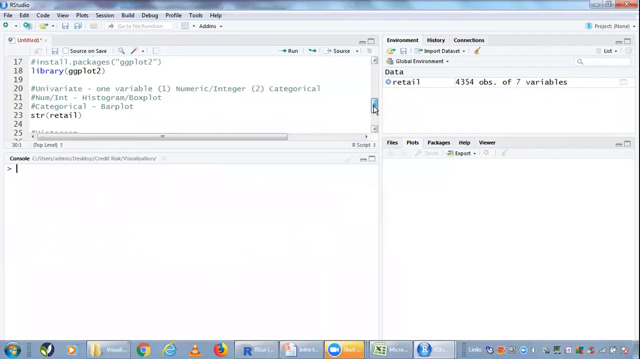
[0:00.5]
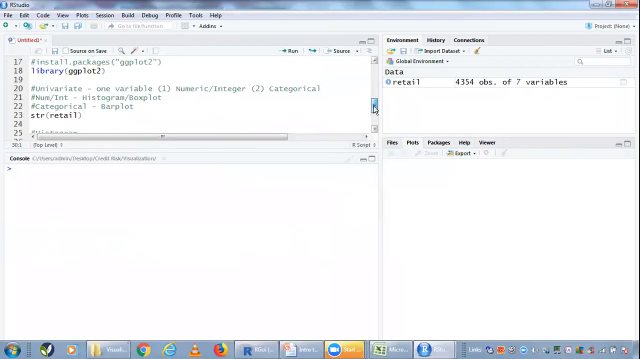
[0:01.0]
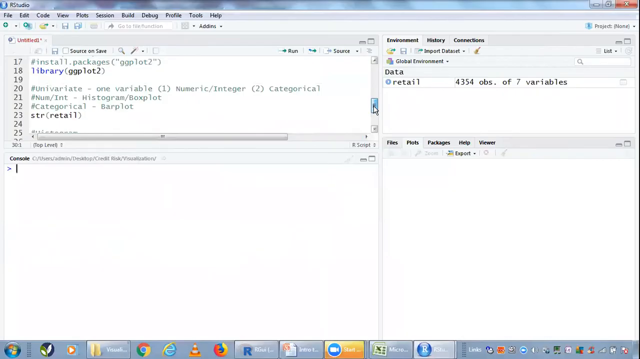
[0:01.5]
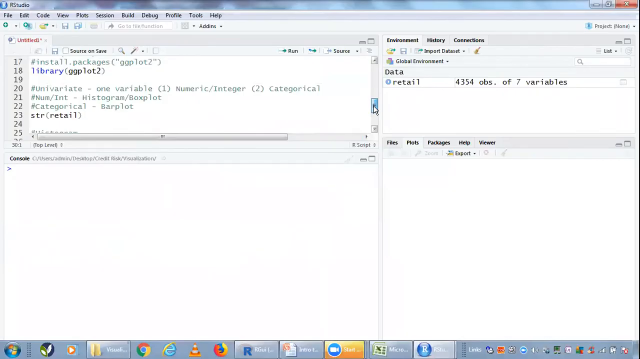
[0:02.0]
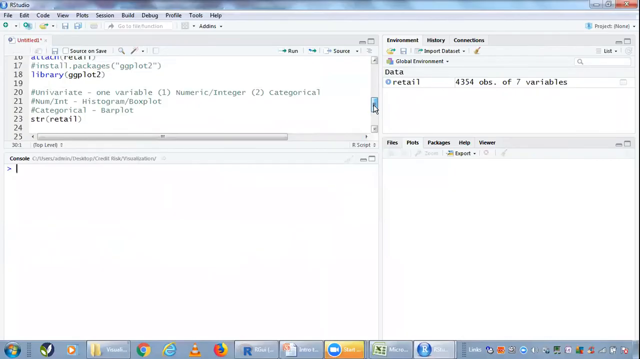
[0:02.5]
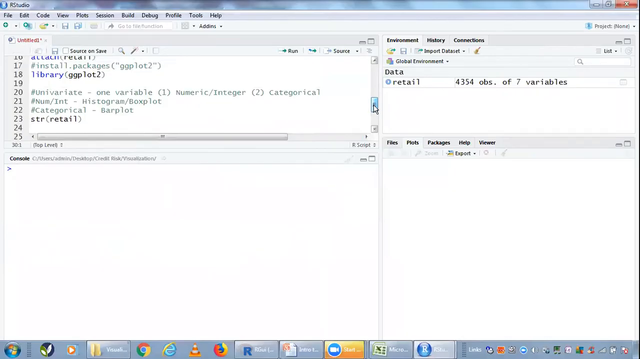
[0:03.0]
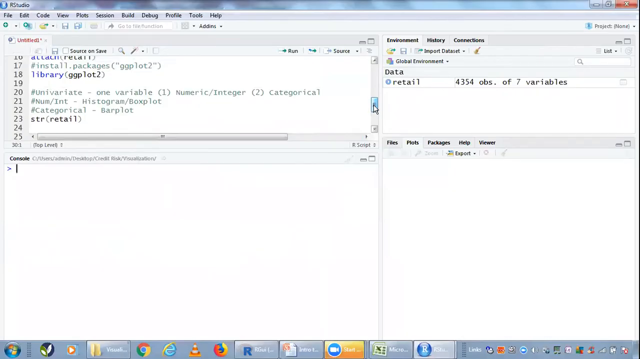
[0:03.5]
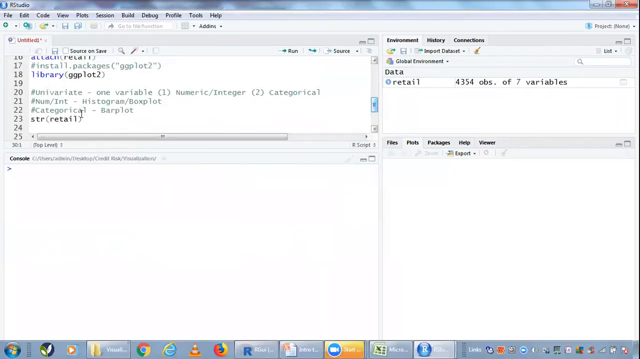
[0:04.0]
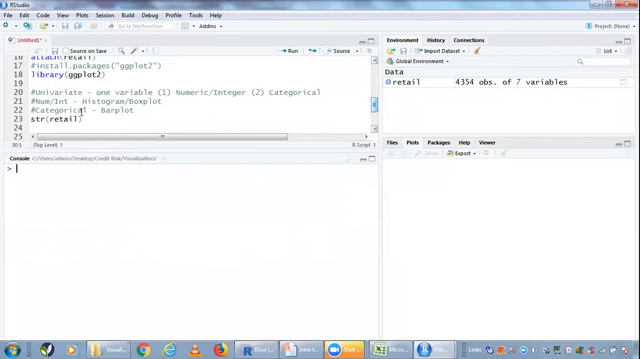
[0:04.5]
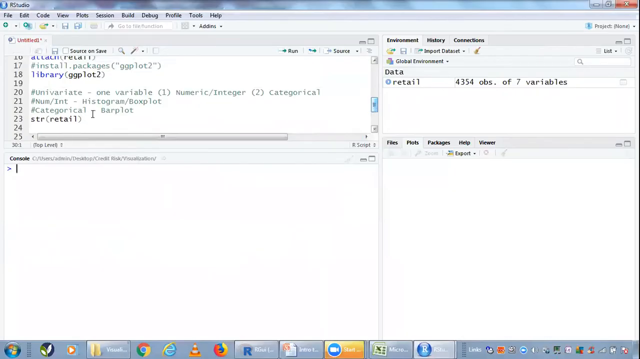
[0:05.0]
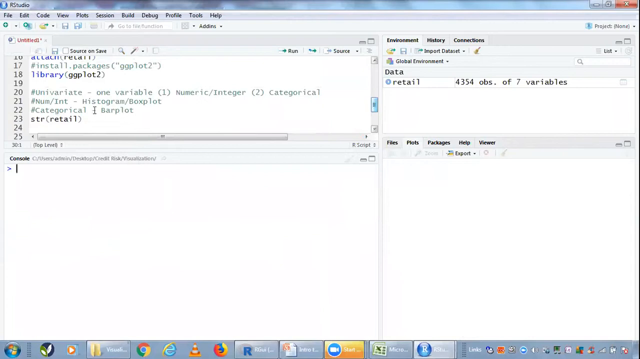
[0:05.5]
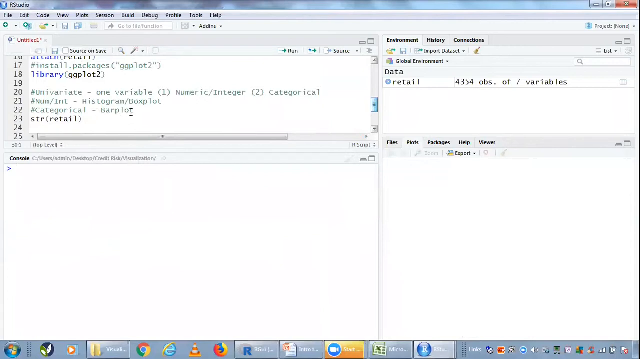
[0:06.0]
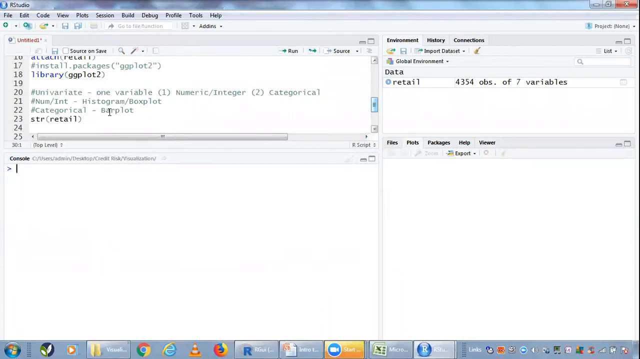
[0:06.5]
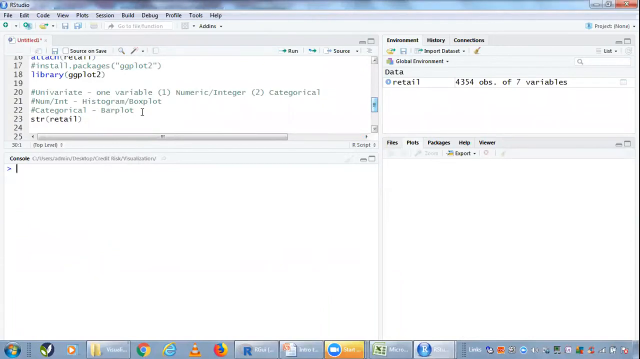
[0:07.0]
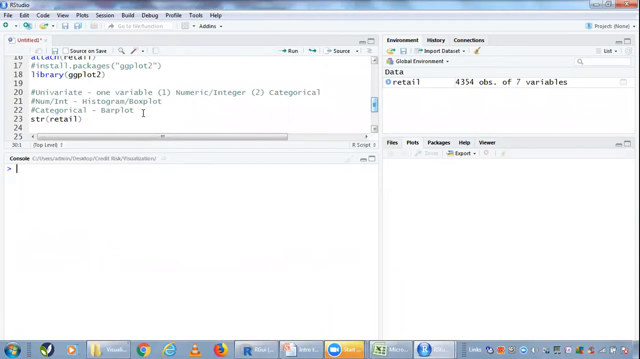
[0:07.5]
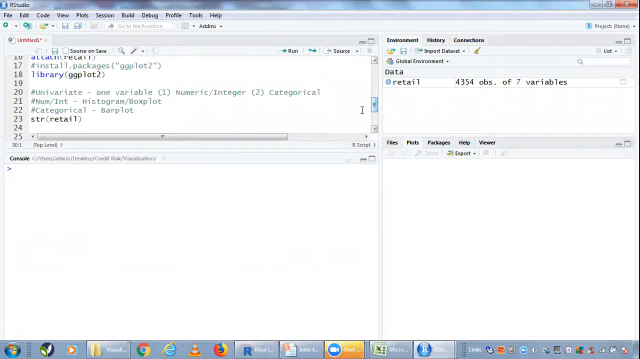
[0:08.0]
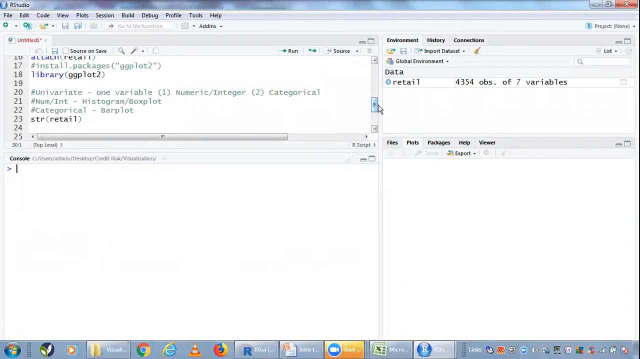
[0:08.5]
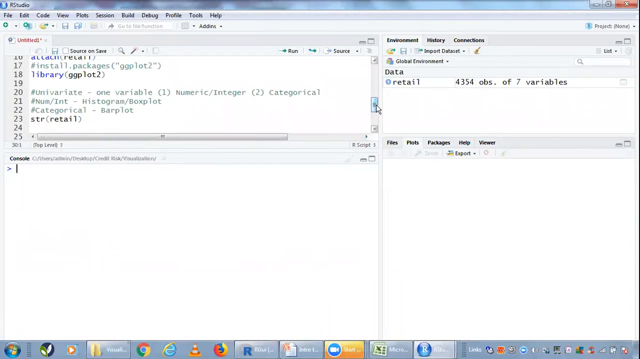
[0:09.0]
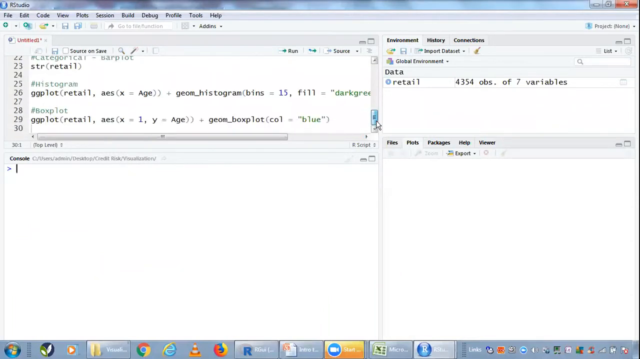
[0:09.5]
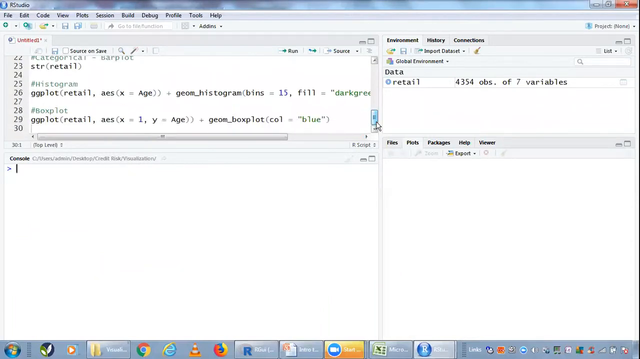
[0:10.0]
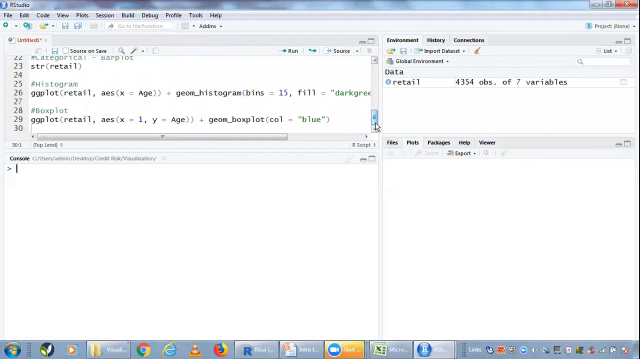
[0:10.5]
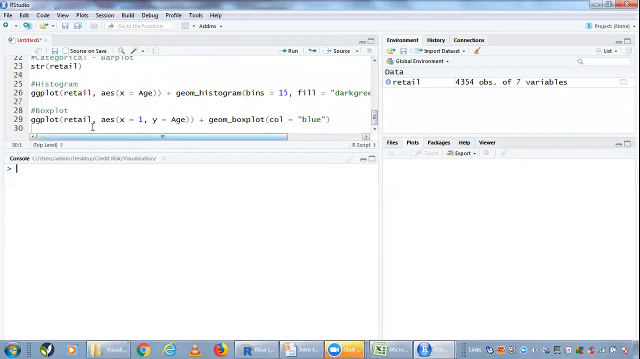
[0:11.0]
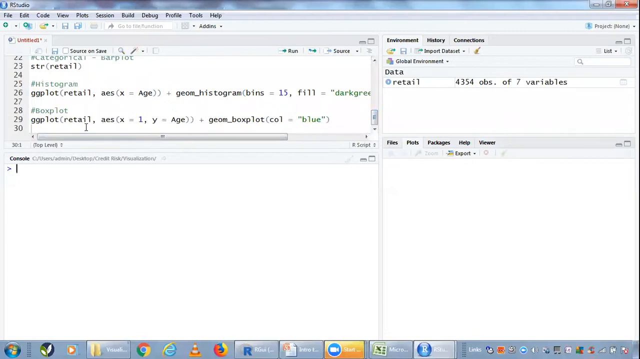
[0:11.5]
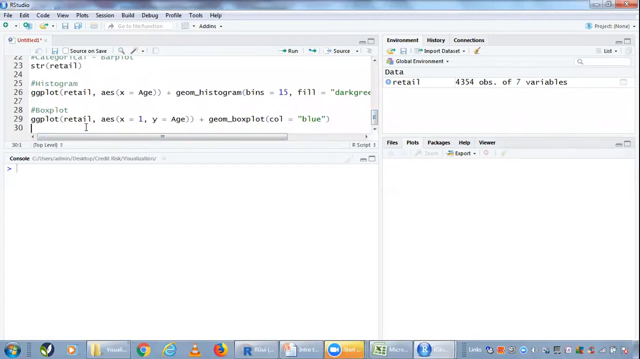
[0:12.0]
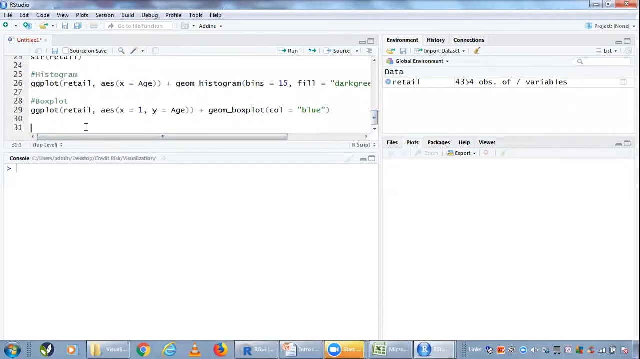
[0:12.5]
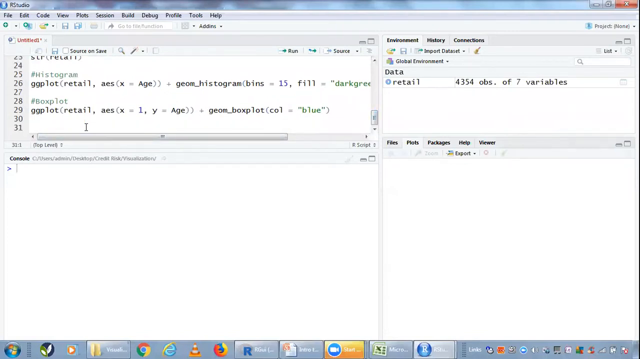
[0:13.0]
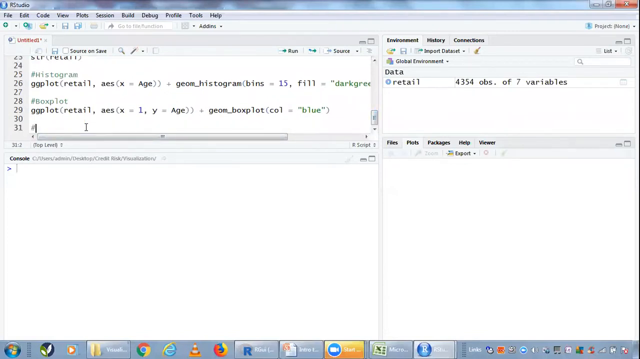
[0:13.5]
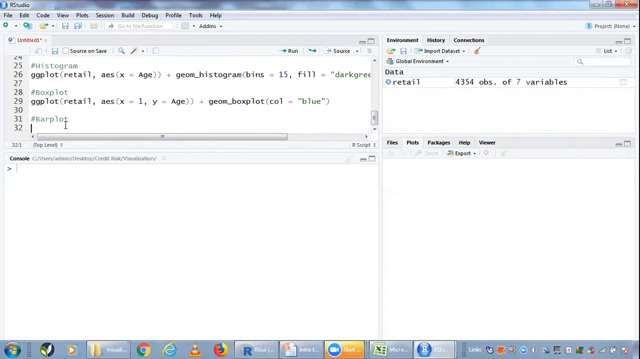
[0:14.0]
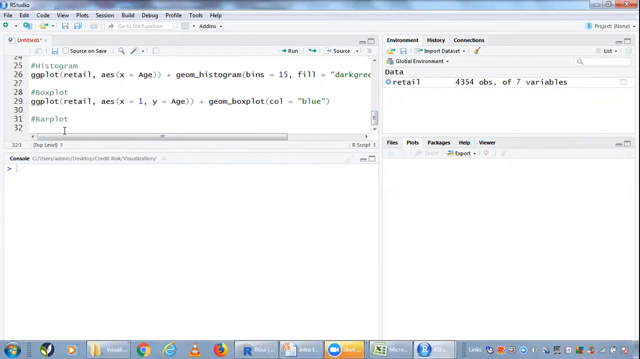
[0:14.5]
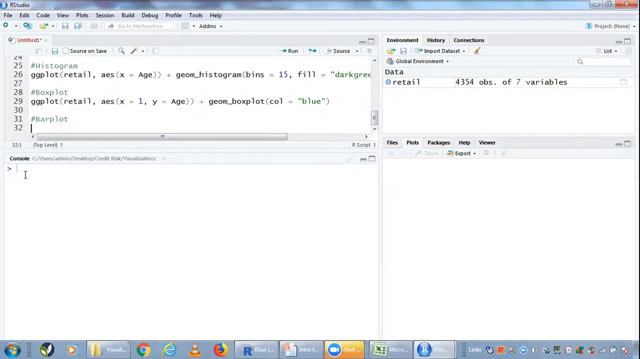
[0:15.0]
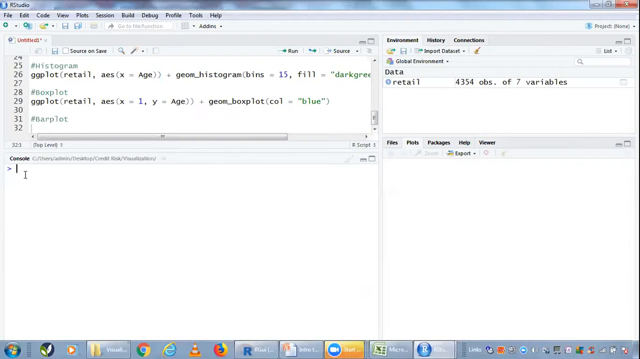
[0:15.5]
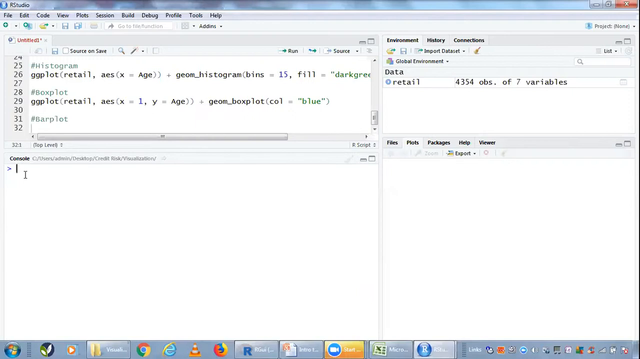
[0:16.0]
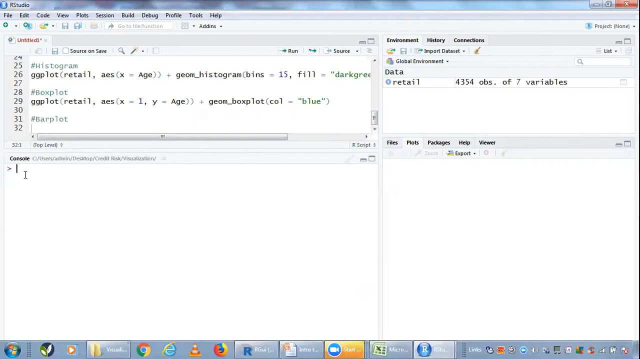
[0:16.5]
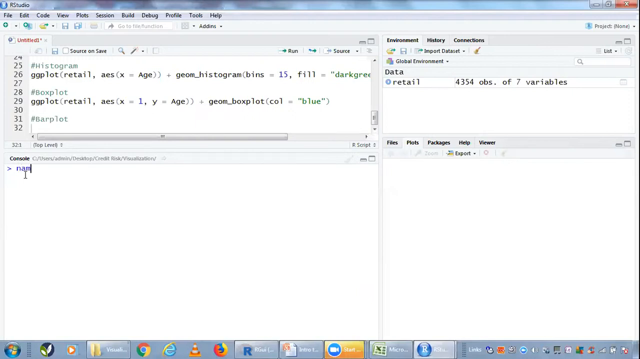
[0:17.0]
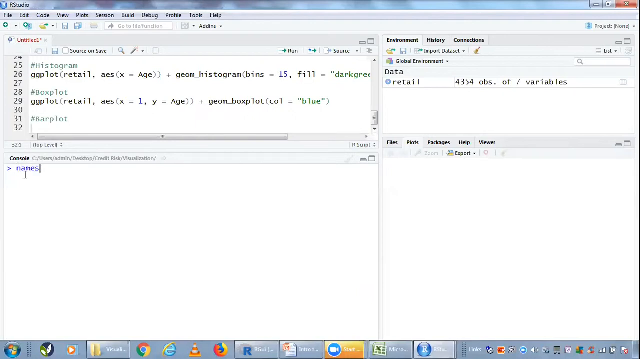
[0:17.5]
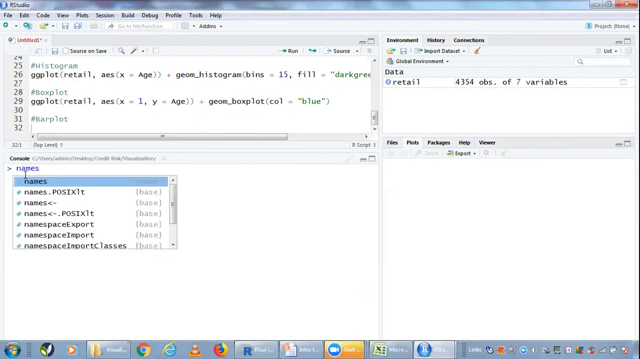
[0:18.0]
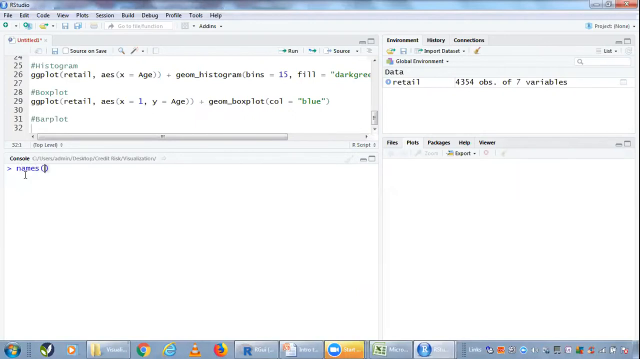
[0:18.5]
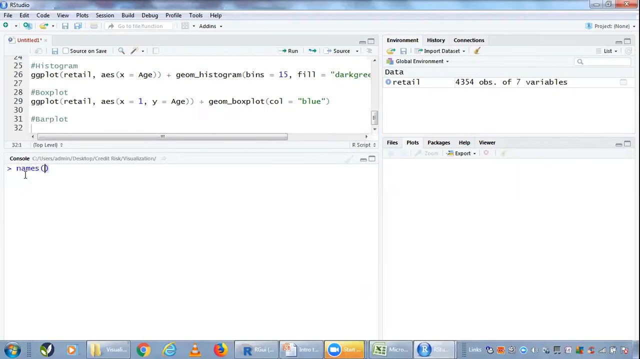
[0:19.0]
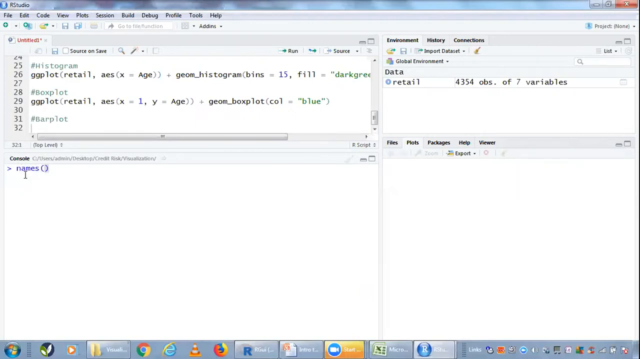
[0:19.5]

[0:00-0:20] The RStudio IDE platform is open, with four panels in the window. In the top left is a window titled "Untitled" with code in it. The cursor scrolls up in the Untitled window just a bit, then hovers over the text on line 22, which says "categorical bar plot". The user then scrolls to the bottom of this window, clicks on line 31 and types "#barplot". Next they go down to the console window underneath, on the bottom left side, and type "names"; a drop-down menu appears with different prompts beginning with the word "names", and the user types a set of parentheses after "names".